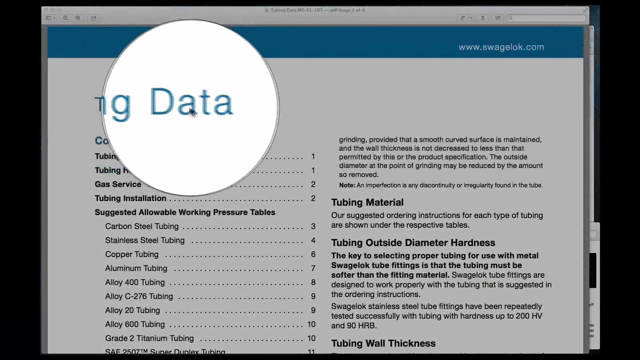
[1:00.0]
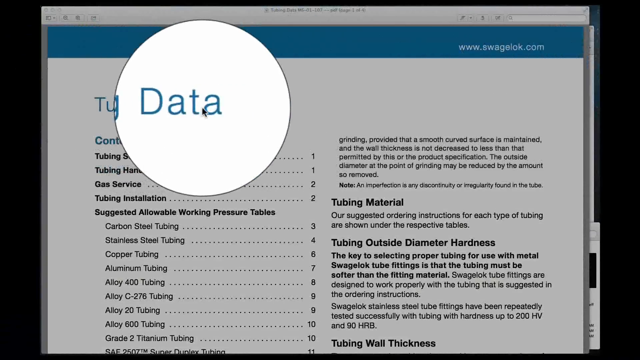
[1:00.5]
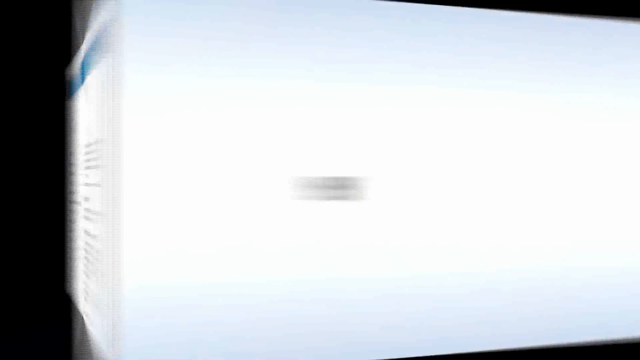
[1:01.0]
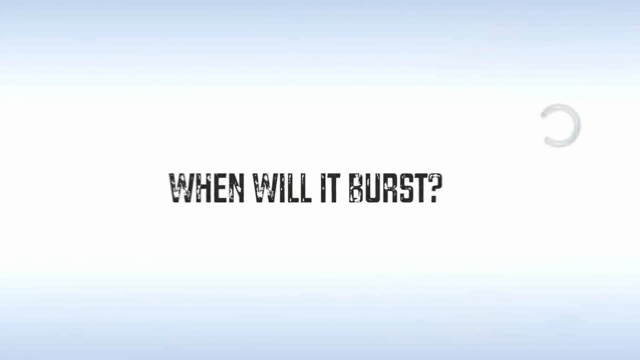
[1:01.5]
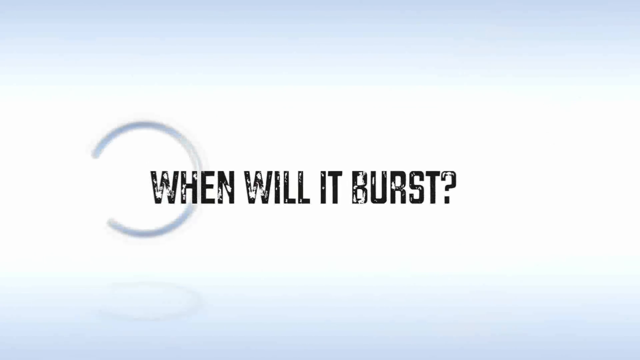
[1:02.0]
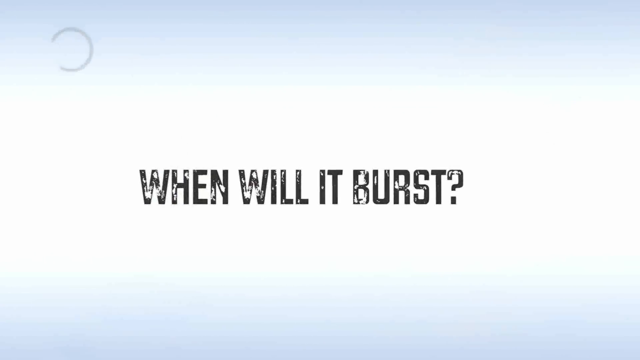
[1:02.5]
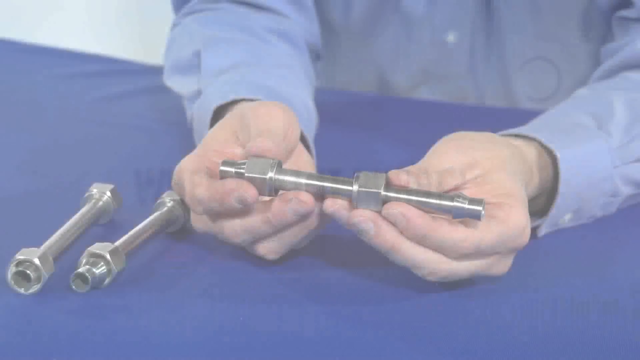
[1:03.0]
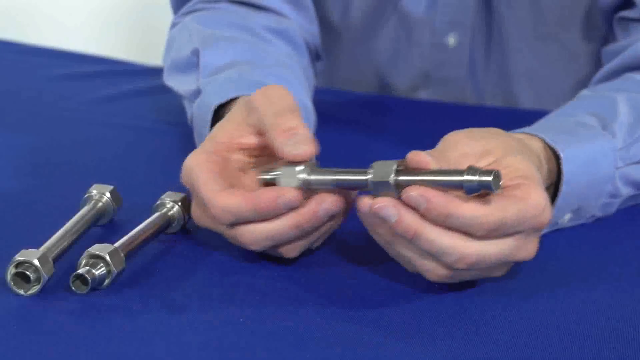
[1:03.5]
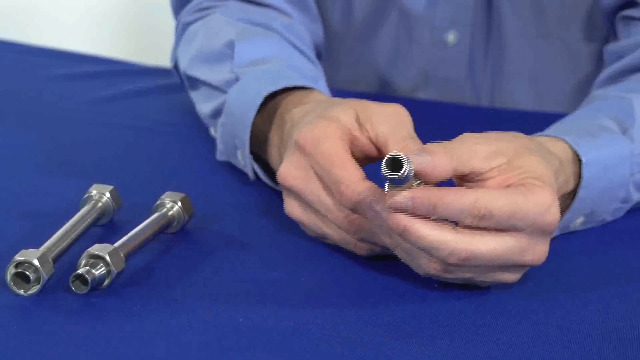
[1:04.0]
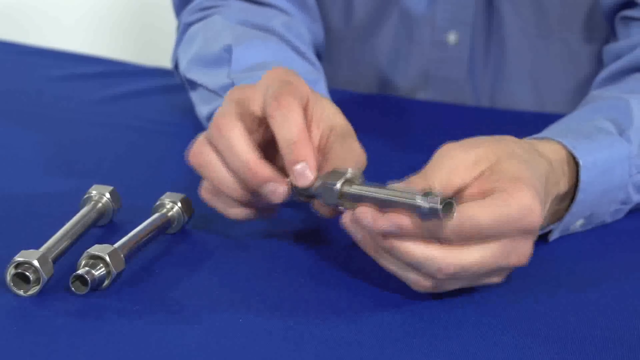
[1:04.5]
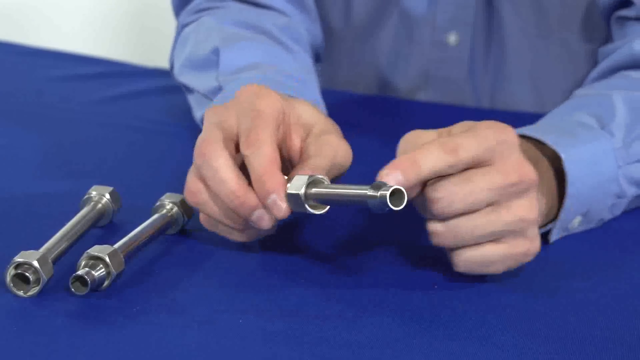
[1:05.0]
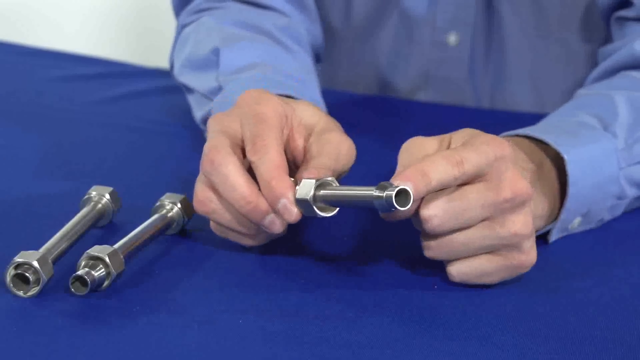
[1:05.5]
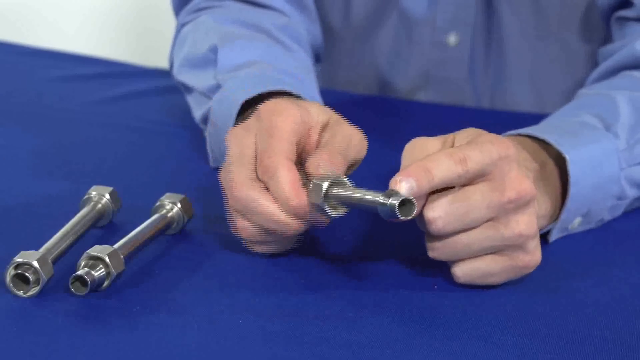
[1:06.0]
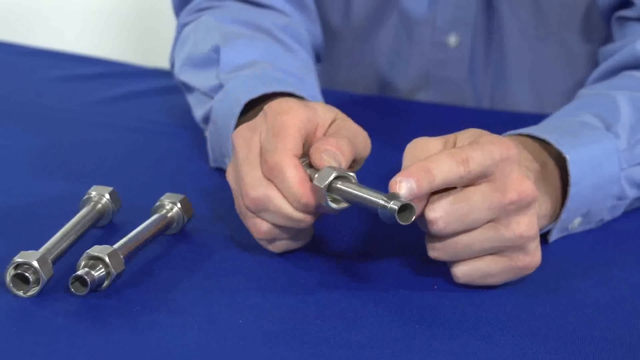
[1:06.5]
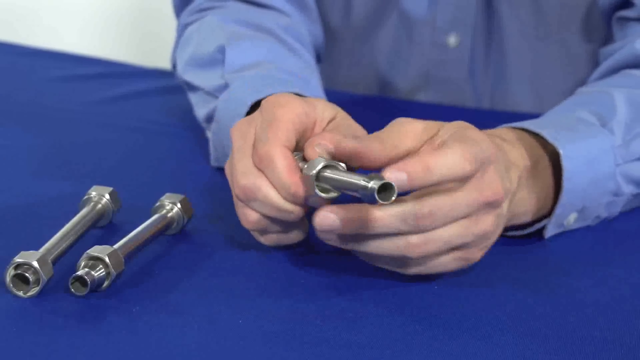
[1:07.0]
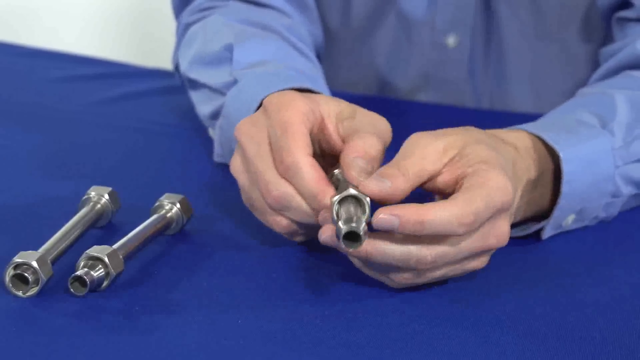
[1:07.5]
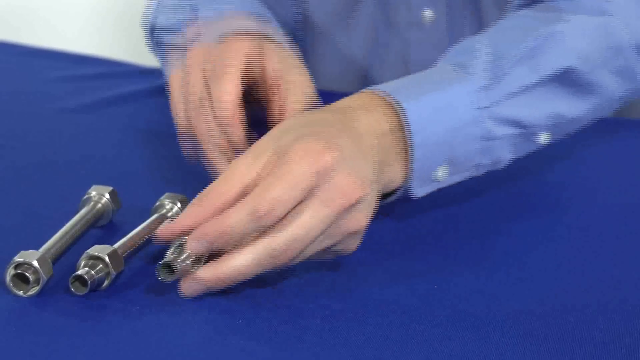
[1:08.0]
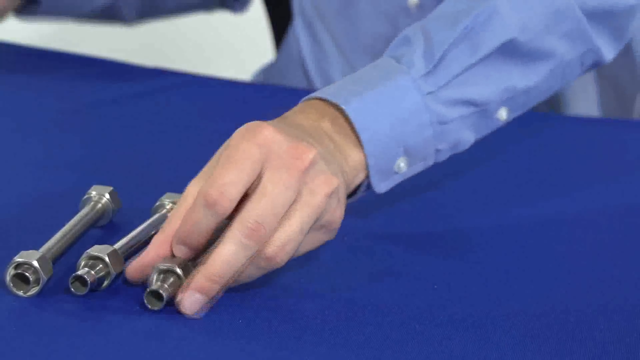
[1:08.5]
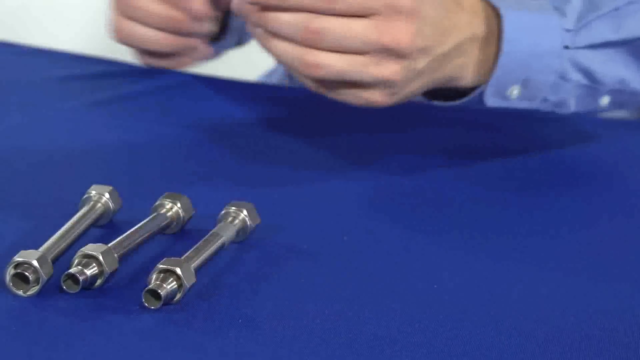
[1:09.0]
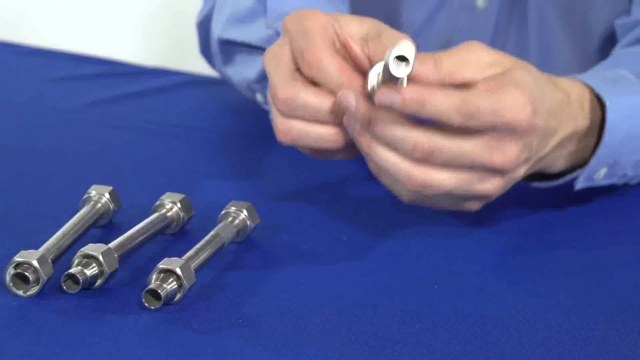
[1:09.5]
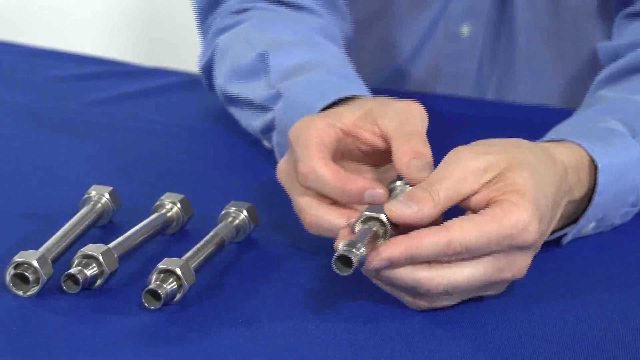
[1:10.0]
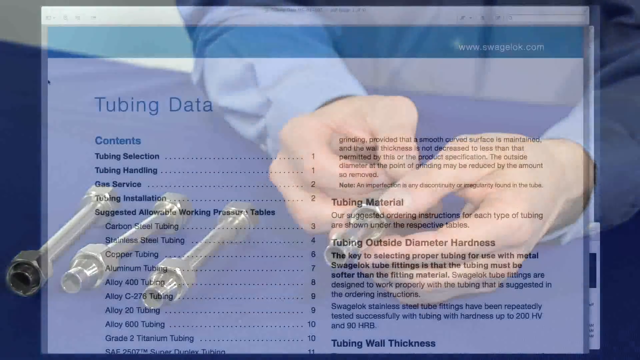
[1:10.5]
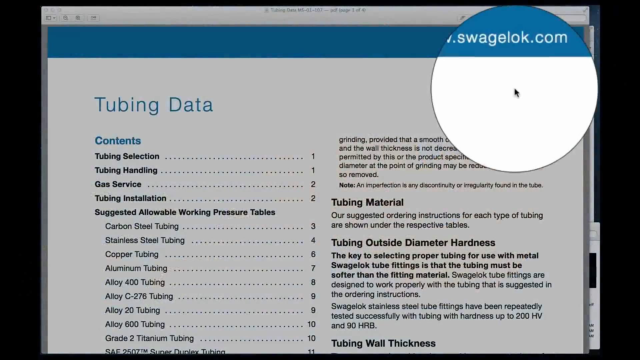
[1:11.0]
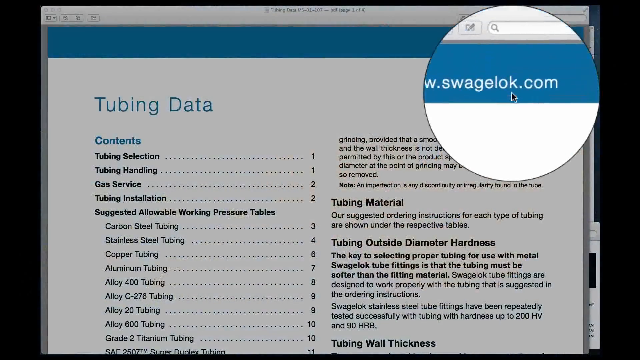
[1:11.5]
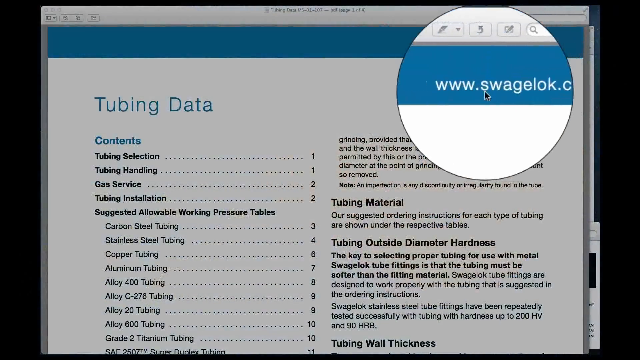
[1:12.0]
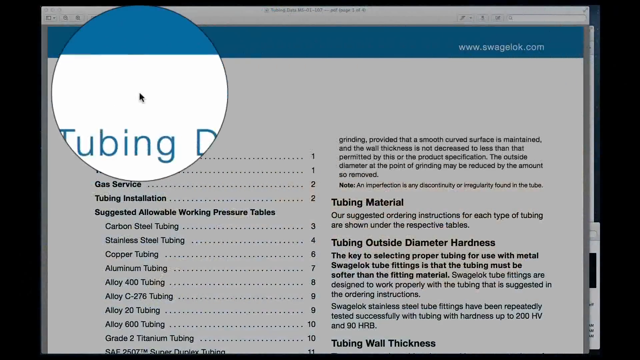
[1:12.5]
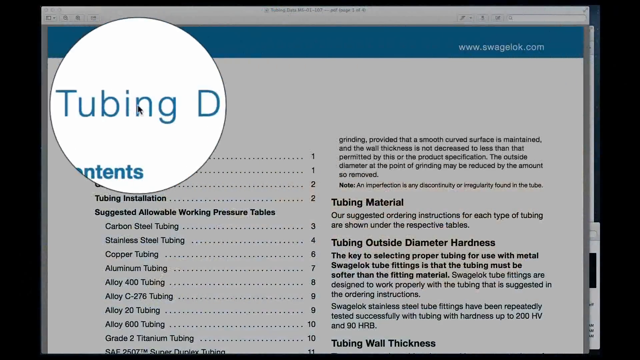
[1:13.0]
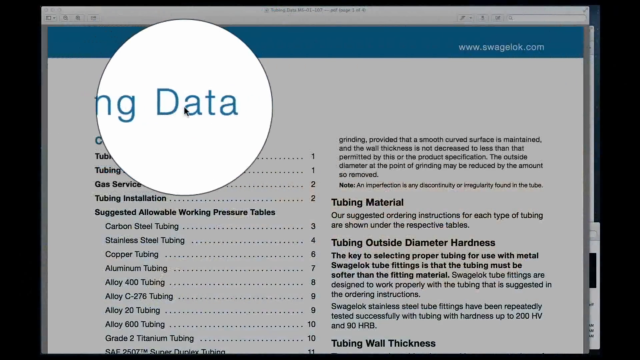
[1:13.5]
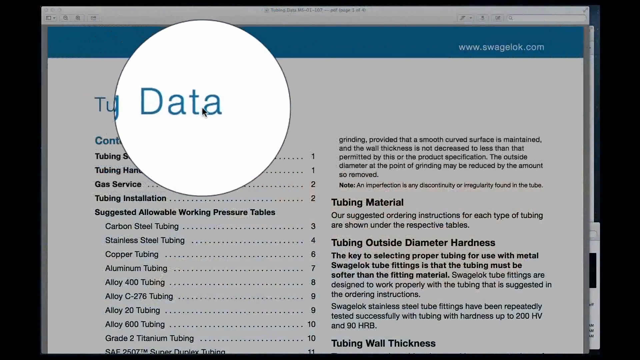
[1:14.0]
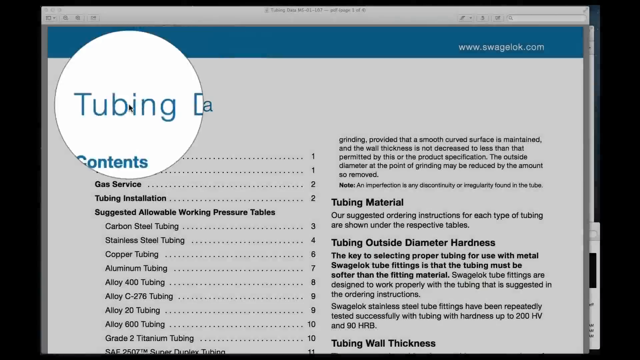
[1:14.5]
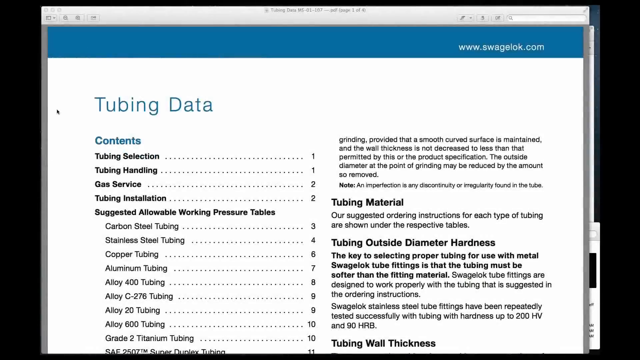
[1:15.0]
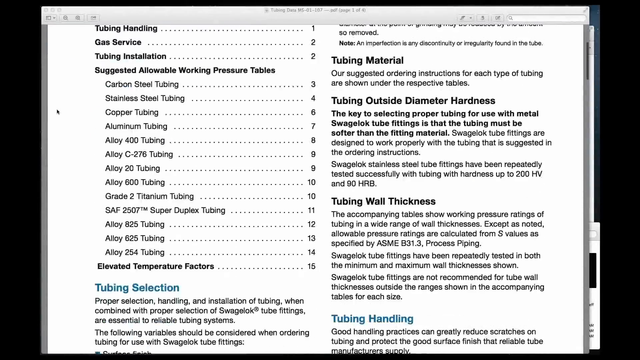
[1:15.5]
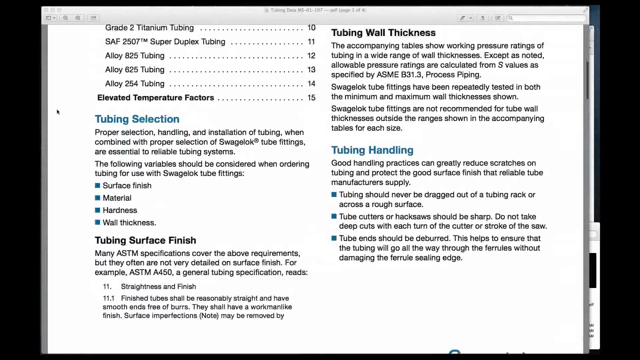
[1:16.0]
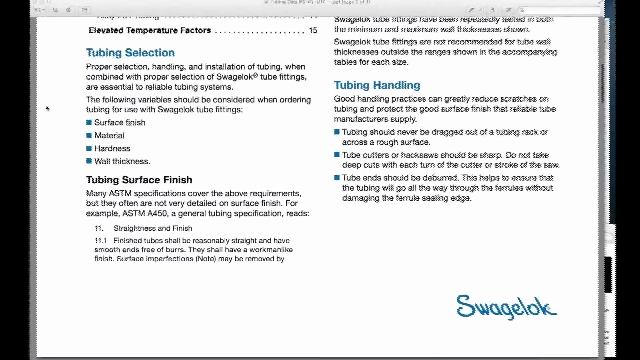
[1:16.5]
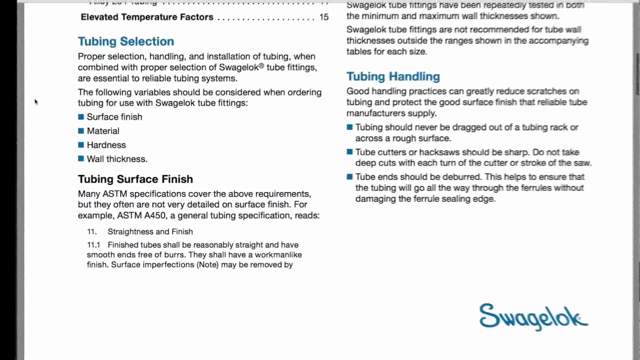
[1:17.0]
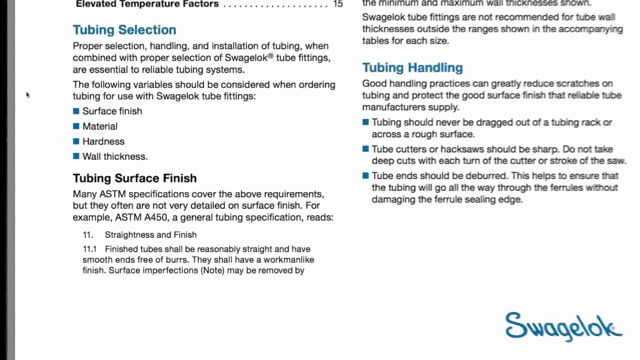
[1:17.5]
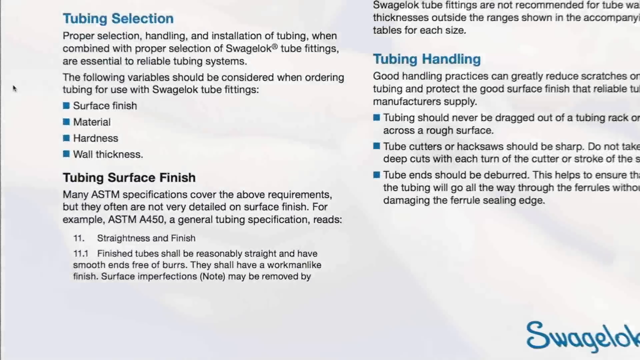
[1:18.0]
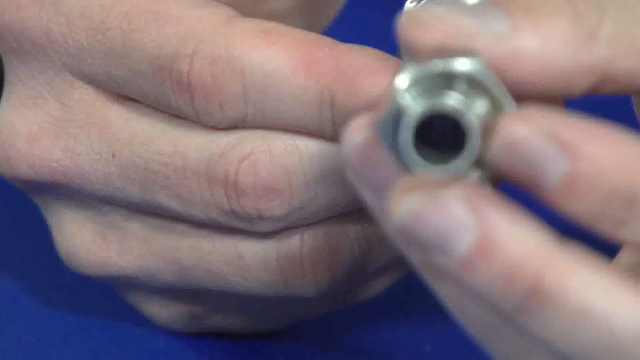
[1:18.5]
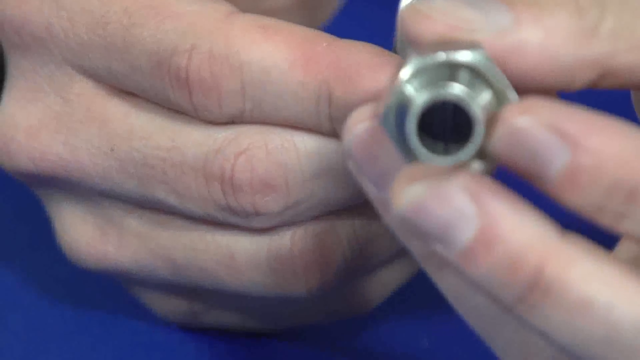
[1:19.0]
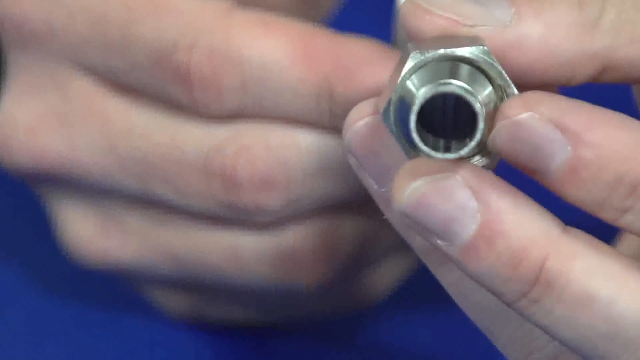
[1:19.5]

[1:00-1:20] The index on Swagelok.com is still on screen; there appear to be several pages, each with different types of tubing and items. A graphic pops up reading "when will it burst?" The man in the blue shirt has several pieces of pipe or tubing laid out in front of him on what looks to be a blue table covering or tablecloth. The pipes seem to be chrome-colored, perhaps steel, with flared ends and nuts on both ends, and the man moves them around in his hands. The video returns to the index page with the tubing data section, highlighting "Swagelok.com" at the top of the screen and then the "tubing data" title at the top of the index.